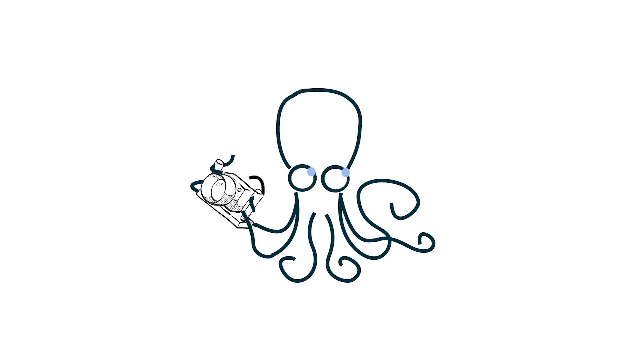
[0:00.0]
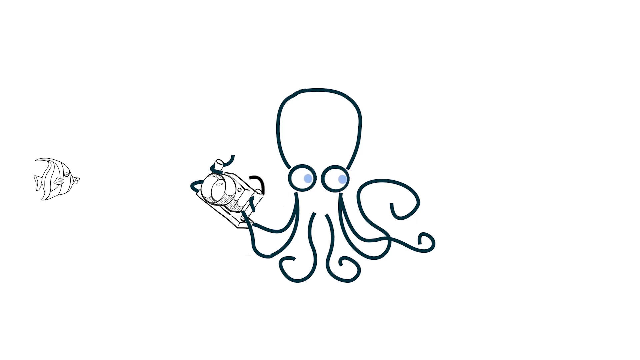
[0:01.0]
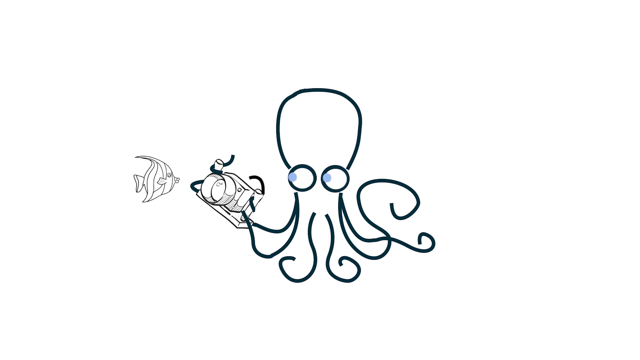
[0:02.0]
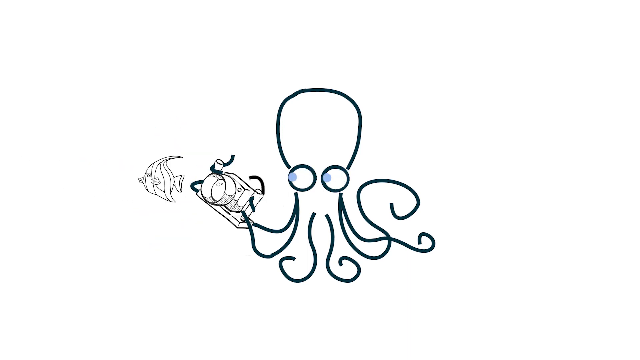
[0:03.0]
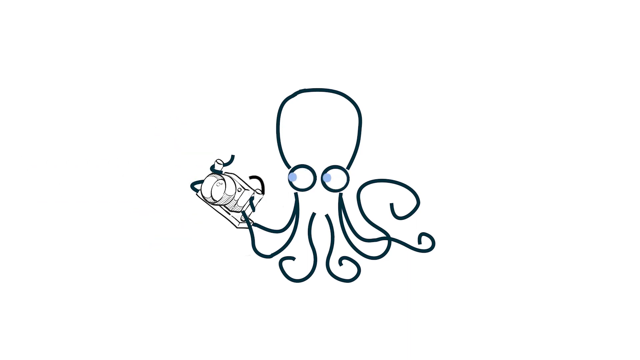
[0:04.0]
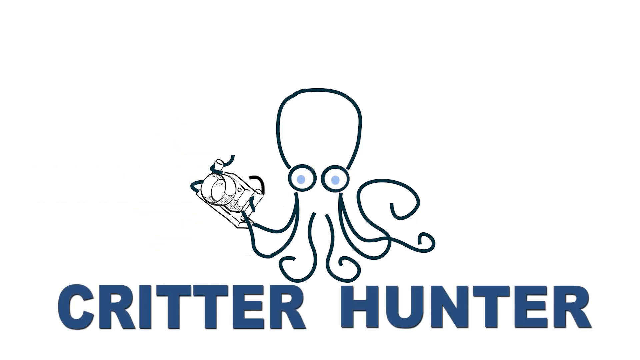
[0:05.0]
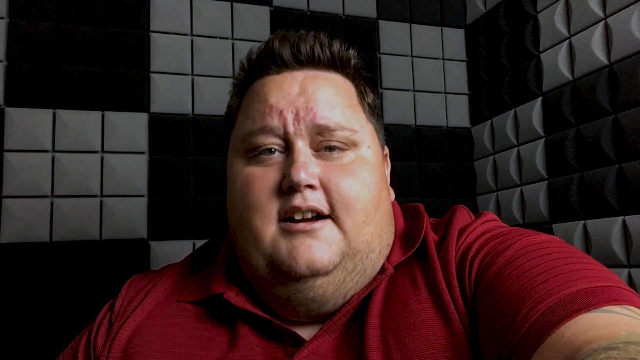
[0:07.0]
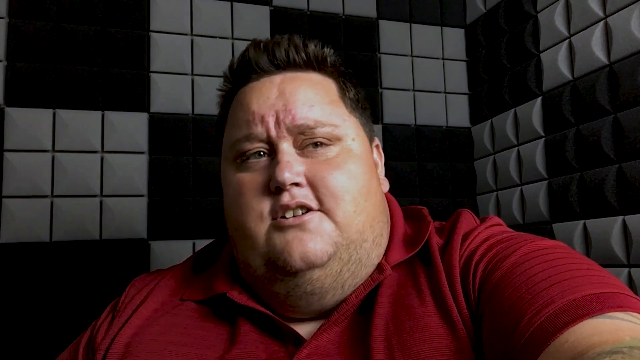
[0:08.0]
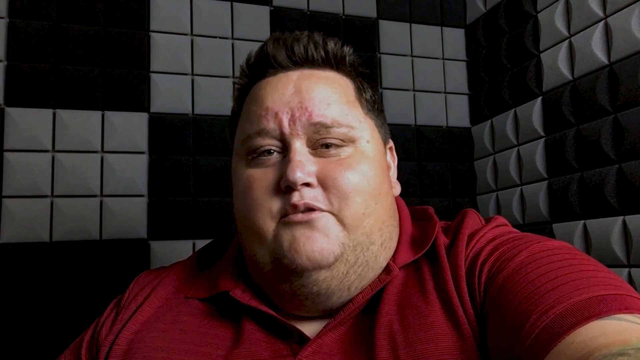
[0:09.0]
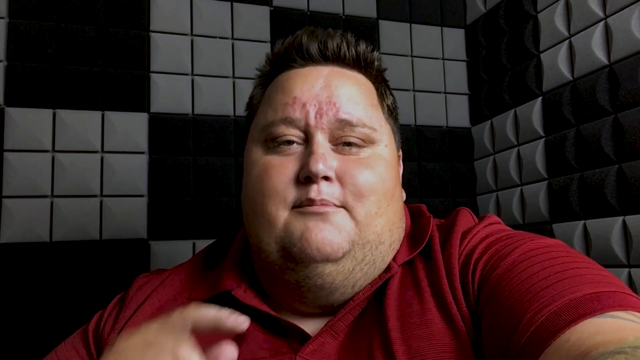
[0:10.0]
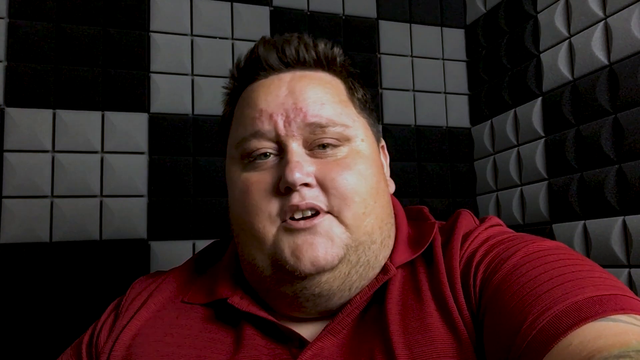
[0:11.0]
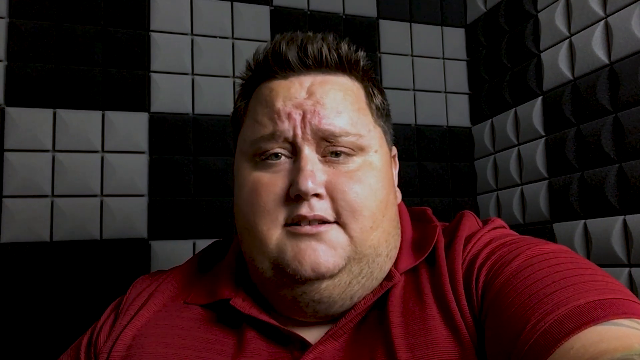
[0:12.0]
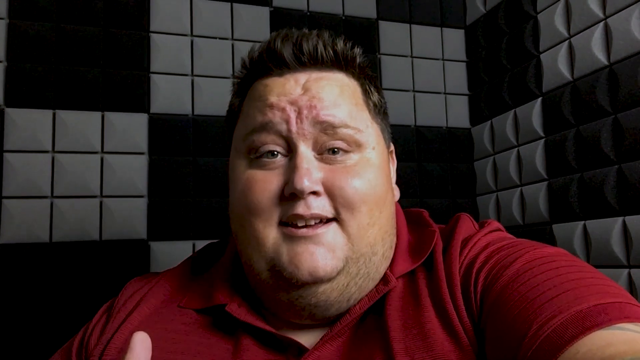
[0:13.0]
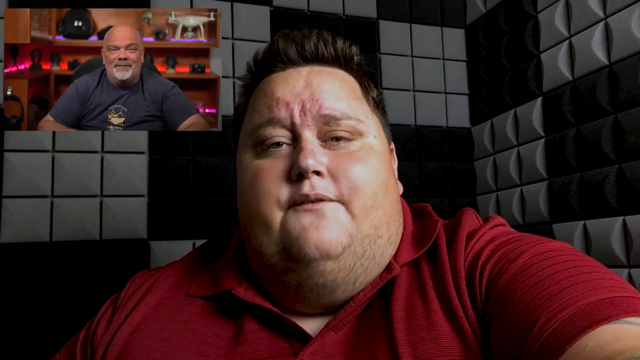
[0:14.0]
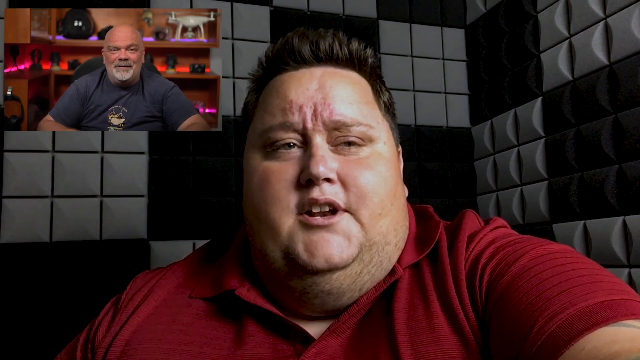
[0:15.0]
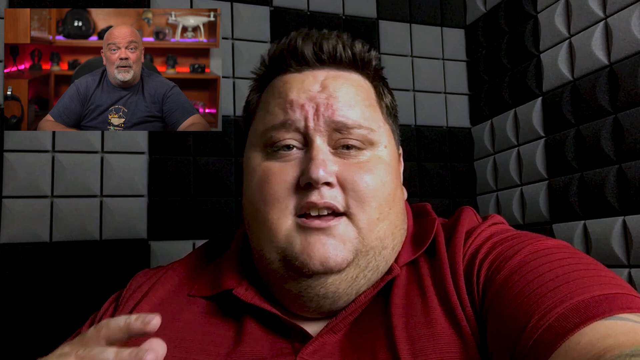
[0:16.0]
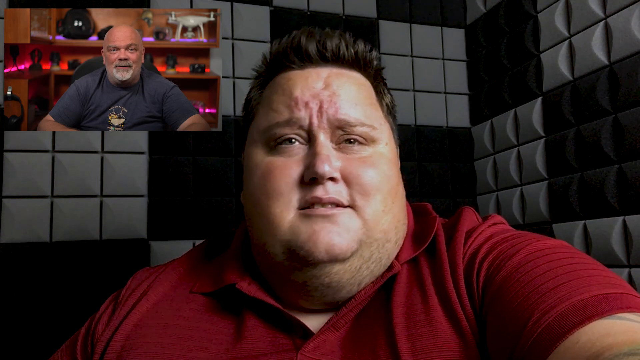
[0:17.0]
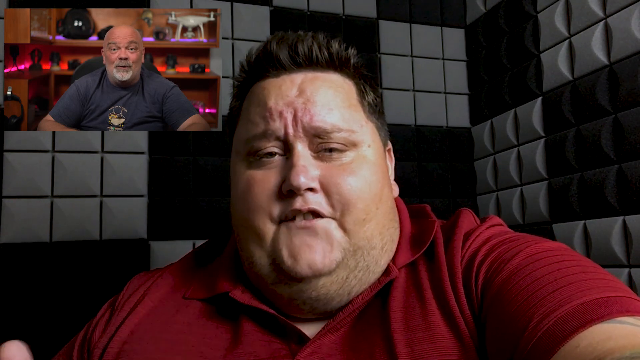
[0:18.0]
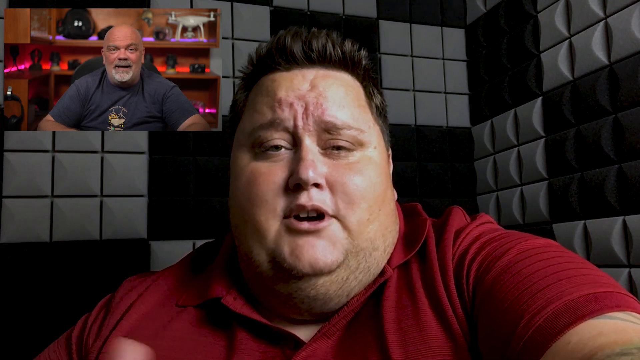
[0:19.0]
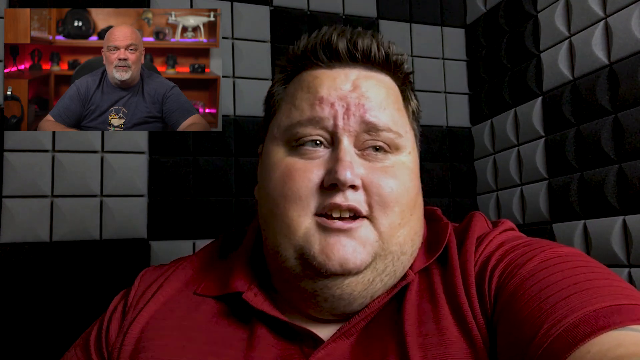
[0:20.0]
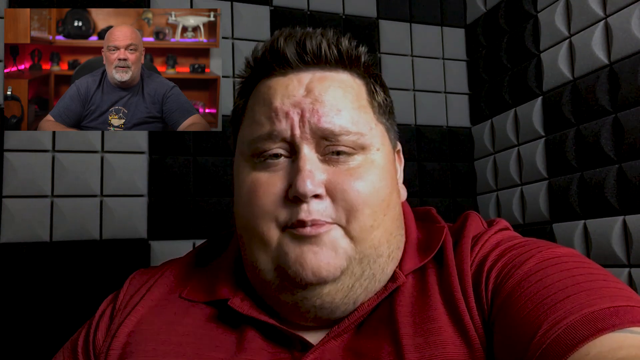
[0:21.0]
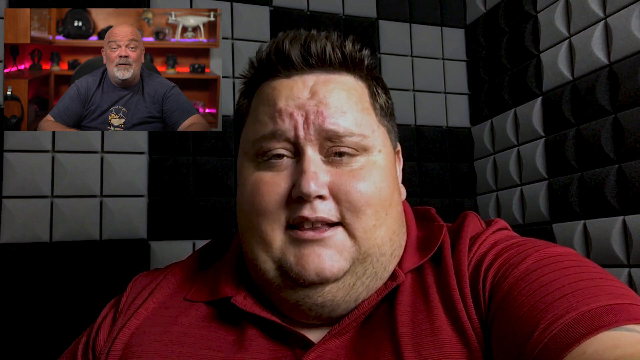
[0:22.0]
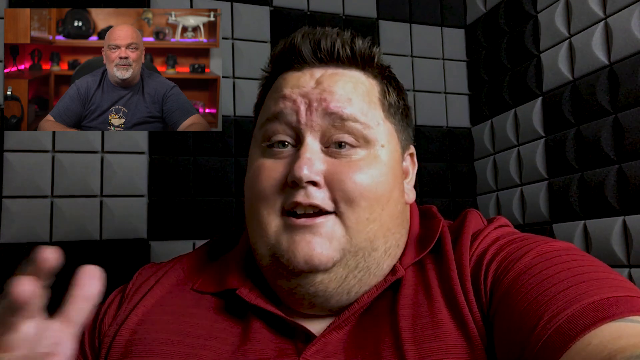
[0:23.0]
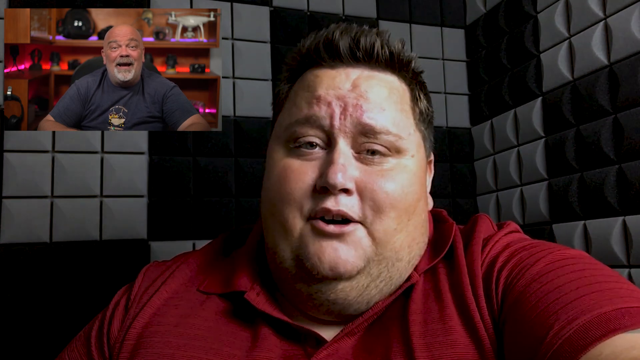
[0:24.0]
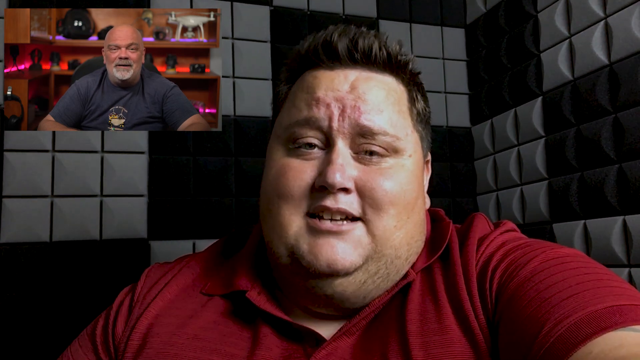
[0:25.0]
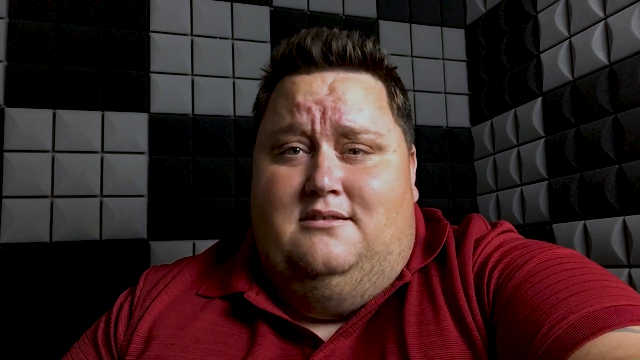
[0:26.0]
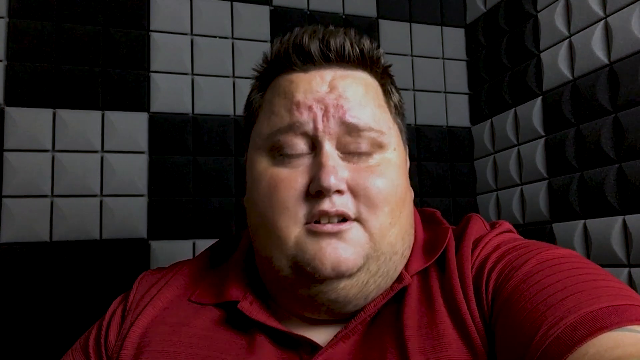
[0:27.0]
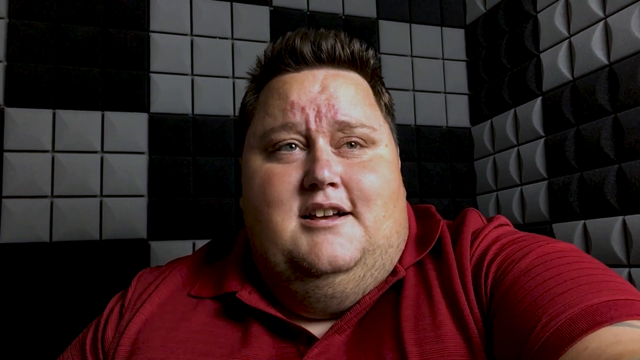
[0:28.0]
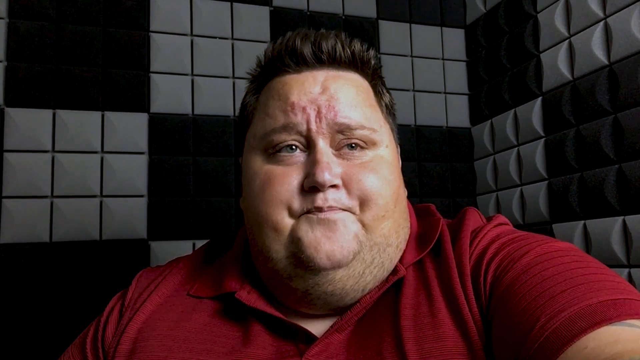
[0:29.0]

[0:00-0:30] The video opens with a drawing of an octopus on a white background. Its eyes, painted light blue, are looking to the side. One of its tentacles holds onto an object while the other tentacles are free. The octopus's eyes move up, down and to the side. An animated fish scrolls in from the left, and as it approaches the octopus, the device the octopus is holding emits a cyan line. The fish turns back and disappears out of the frame. Text appears in dark blue reading "Critter Hunter" as the octopus's eyes continue to move. The video then transitions to an obese man with dark black hair, seated and wearing a red t-shirt, with a black and gray tiled background. He moves his mouth, his head and his hand as he makes a point. A frame appears in the top left of the screen showing another man with a gray beard, seated and wearing a navy t-shirt with a logo in the middle. Behind him, there is a black ball on a cupboard, and there is also a drone on the cupboard. The obese man keeps gesticulating, moving his head and talking, while the man in the frame is also talking and raises his eyebrow.